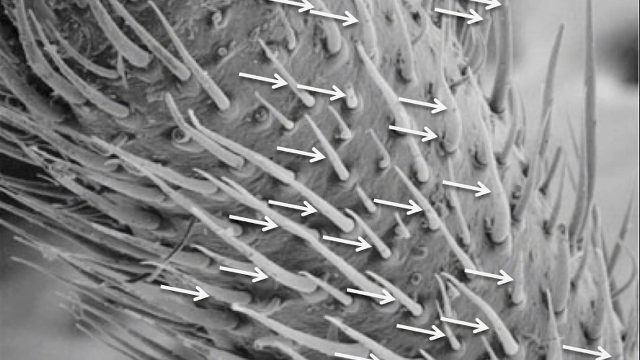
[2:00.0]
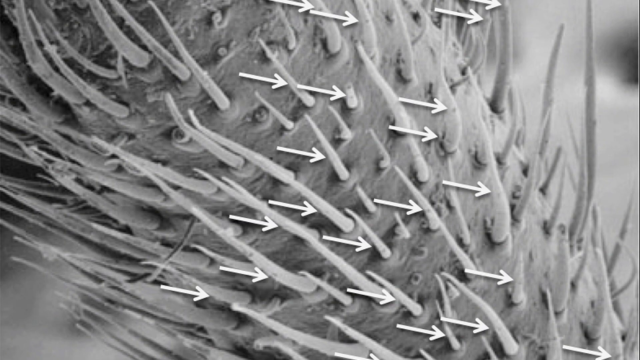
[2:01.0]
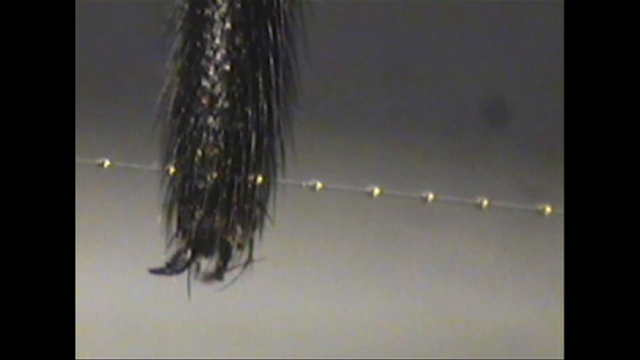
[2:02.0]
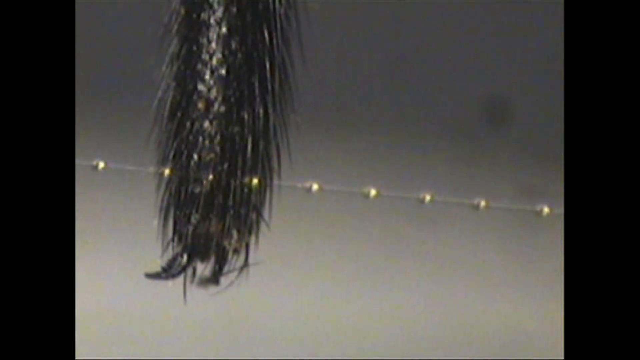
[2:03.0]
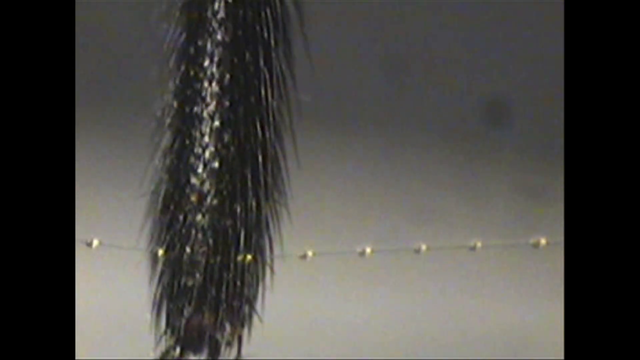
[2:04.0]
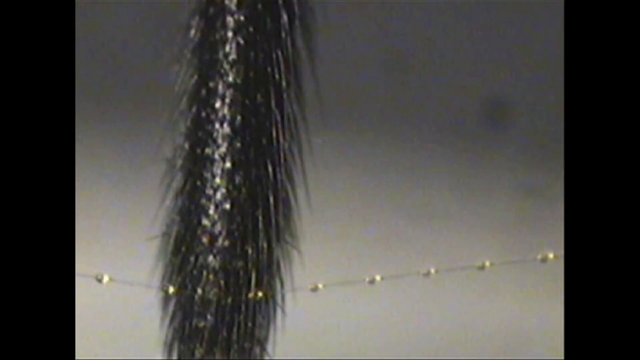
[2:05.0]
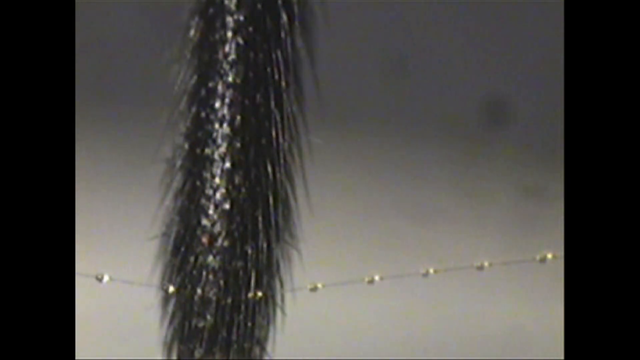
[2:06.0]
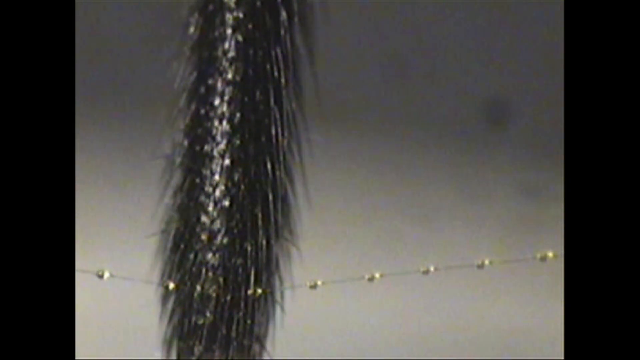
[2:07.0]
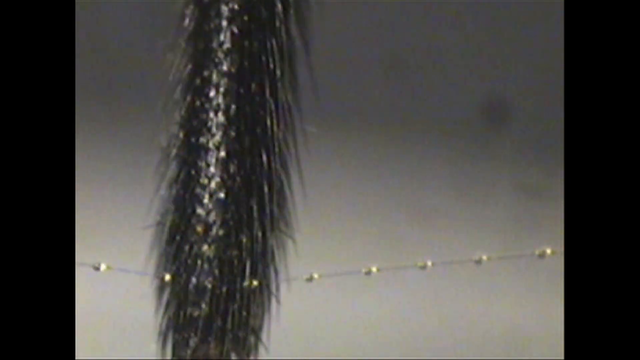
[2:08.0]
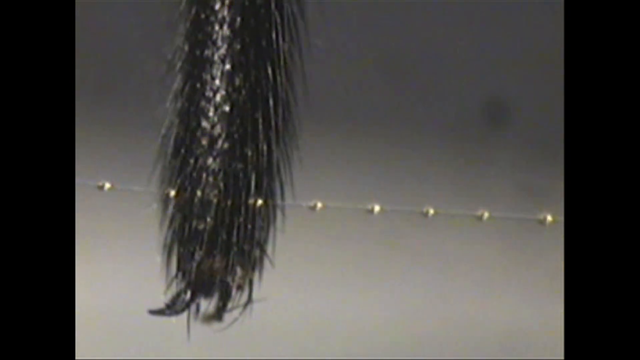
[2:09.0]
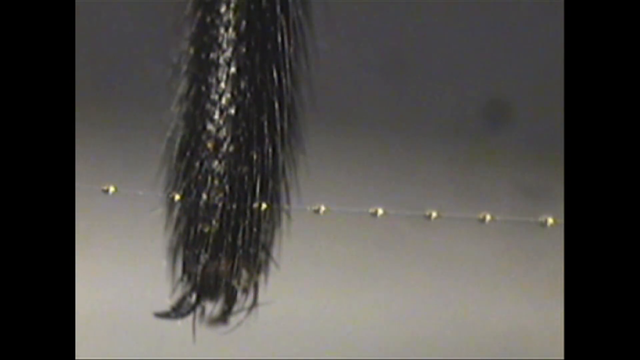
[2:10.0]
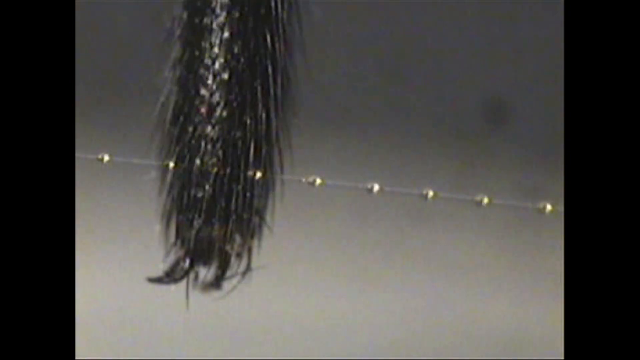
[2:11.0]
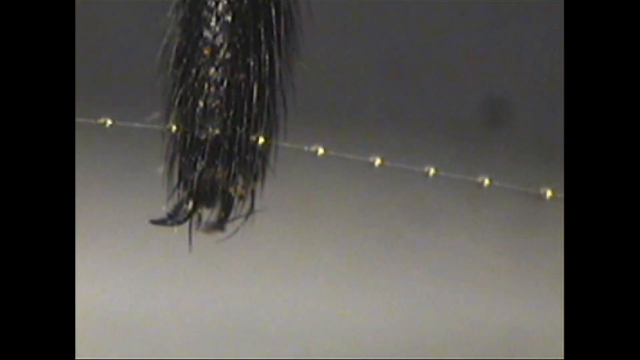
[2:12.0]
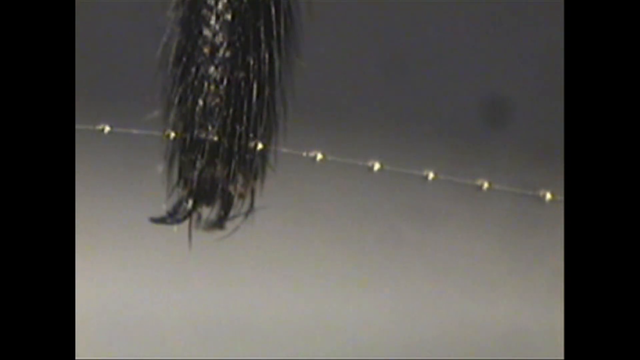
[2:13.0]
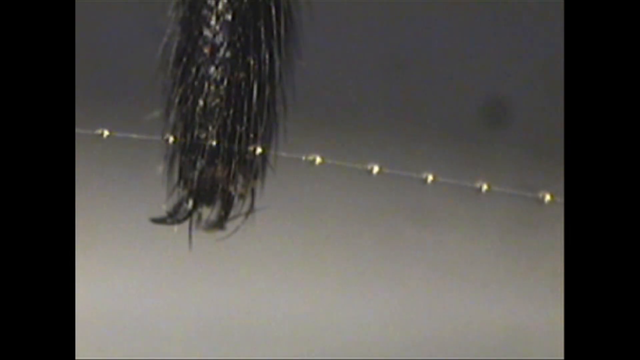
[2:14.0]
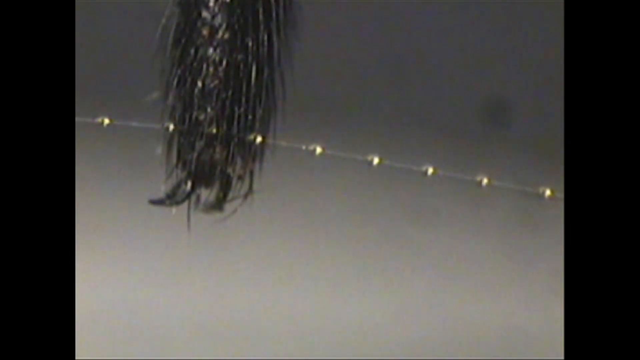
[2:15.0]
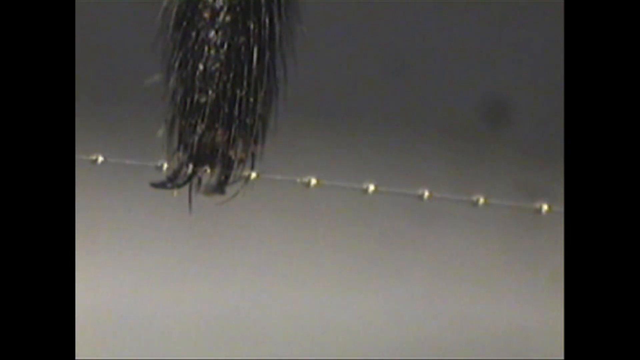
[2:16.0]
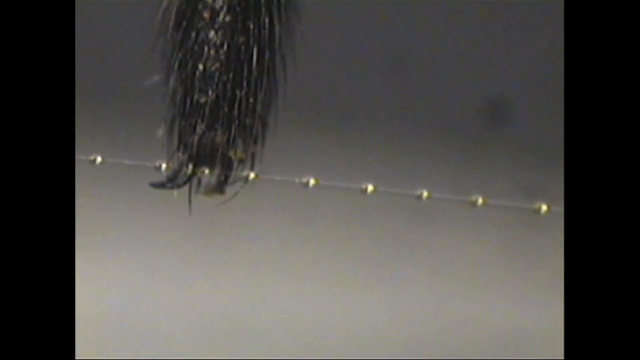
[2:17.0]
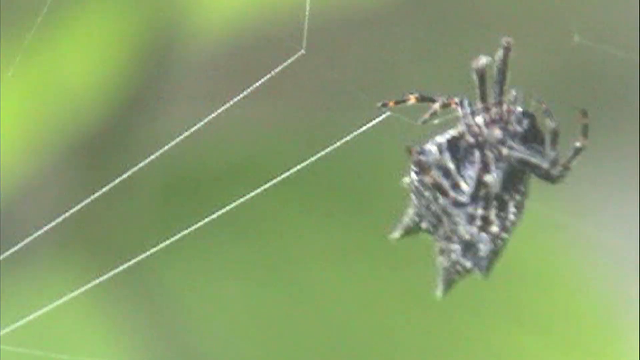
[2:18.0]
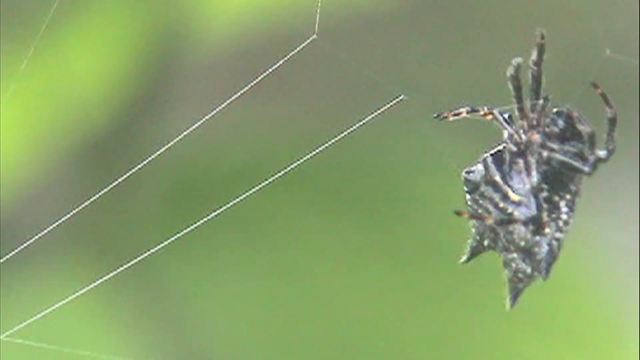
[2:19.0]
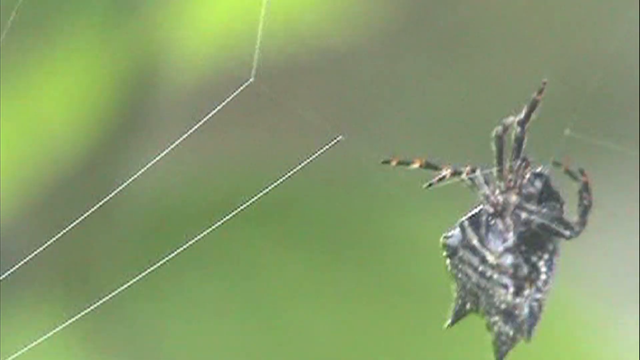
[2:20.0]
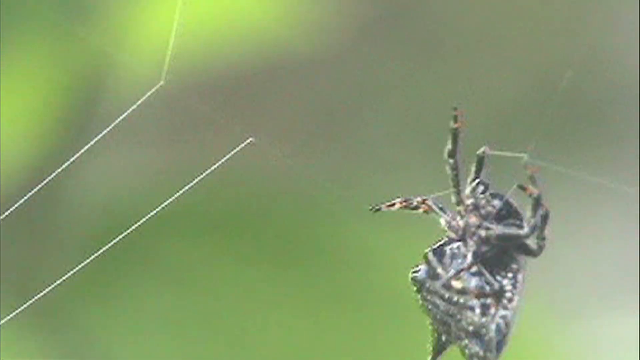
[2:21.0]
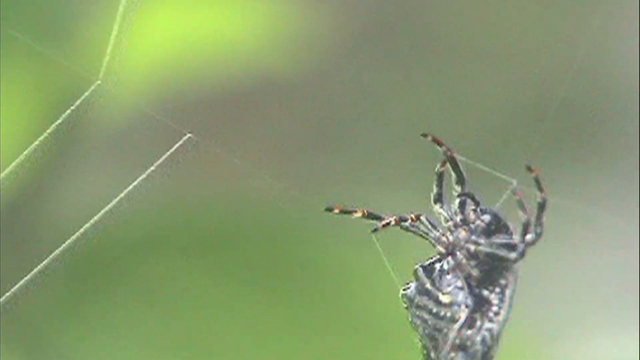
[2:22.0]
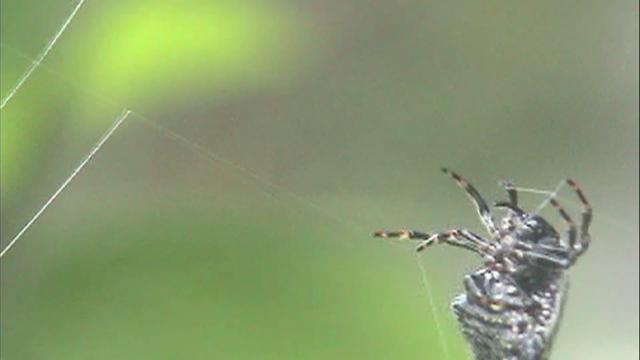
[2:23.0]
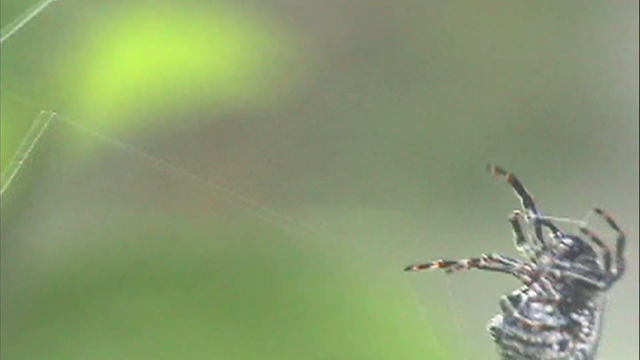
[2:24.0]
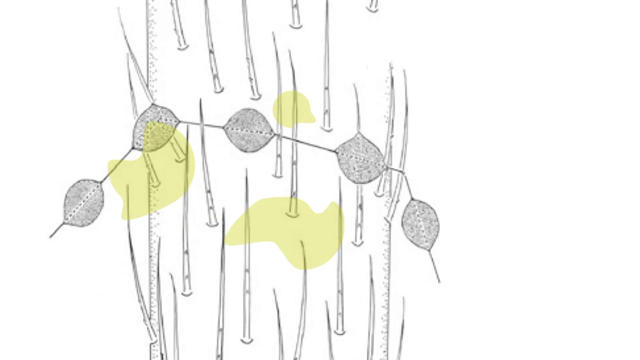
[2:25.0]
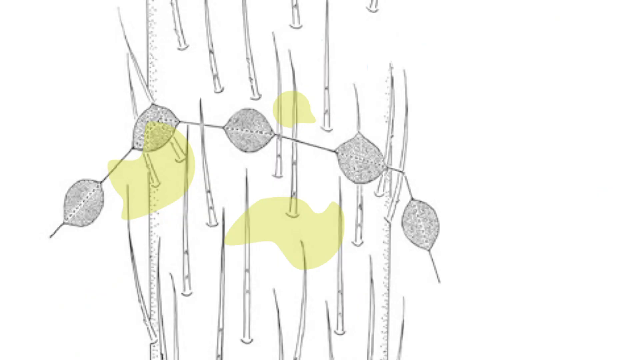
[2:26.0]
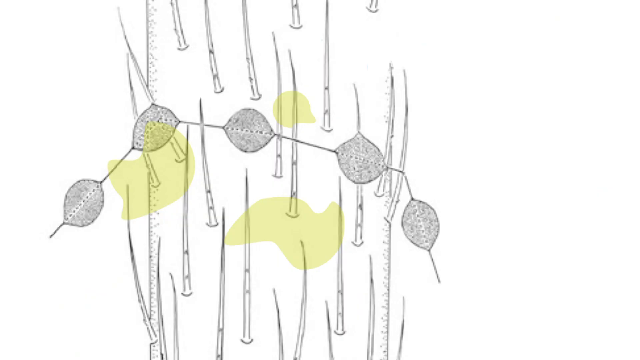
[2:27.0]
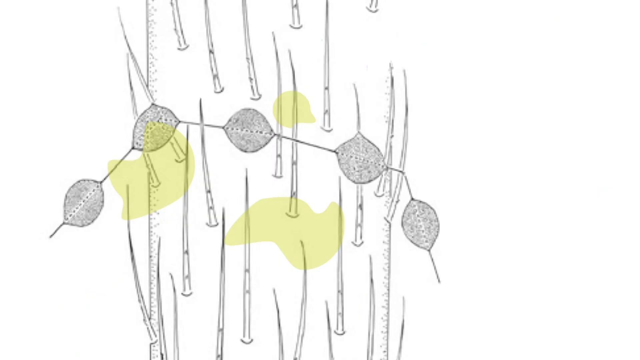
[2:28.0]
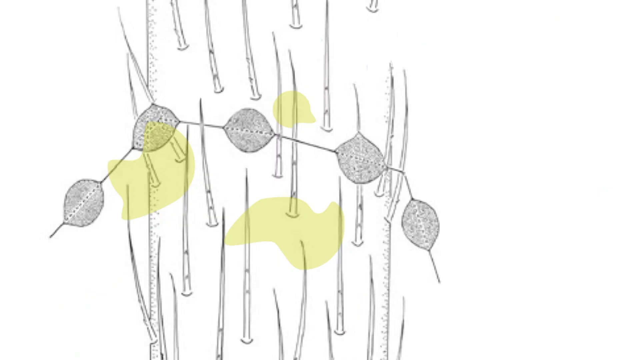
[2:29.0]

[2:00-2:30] A microscopic picture of a spider's leg shows tiny protrusions of hair, with white arrows pointing toward the right at them. The microscopic leg is shown pulling off the spider's own web; the hairs are sort of black, and little dots are visible on the skinny areas of the web where sticky little droplets keep the web sticky. Next comes a drawn picture, possibly hand drawn or computer generated, showing hairs sticking out, some yellow patches, and the web with sort of little sticky circles.